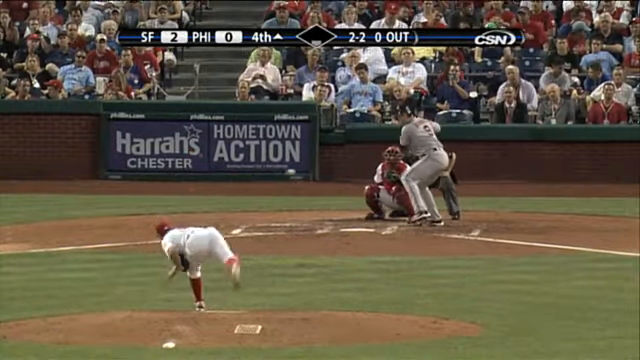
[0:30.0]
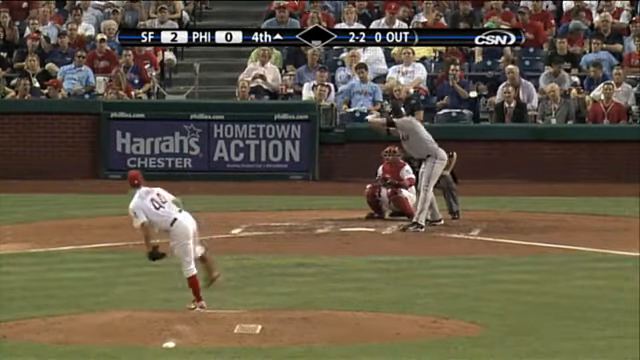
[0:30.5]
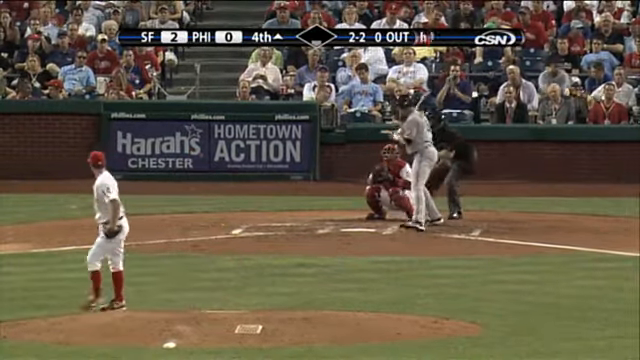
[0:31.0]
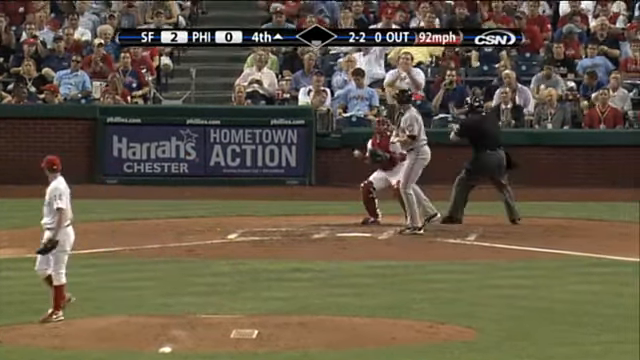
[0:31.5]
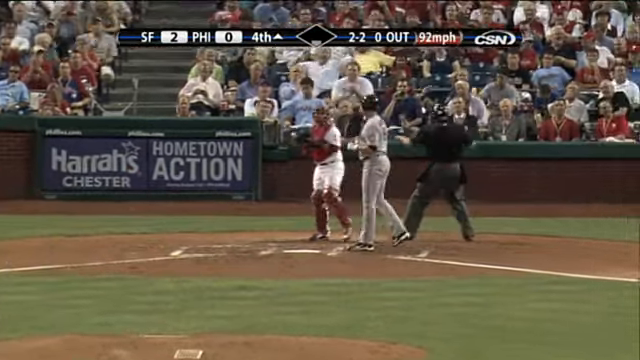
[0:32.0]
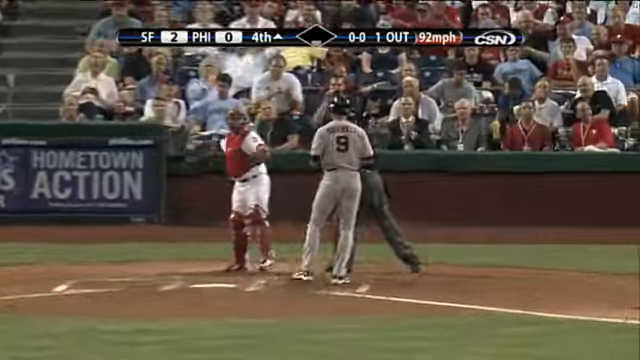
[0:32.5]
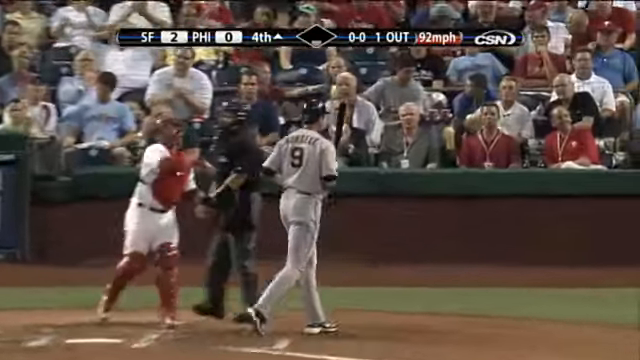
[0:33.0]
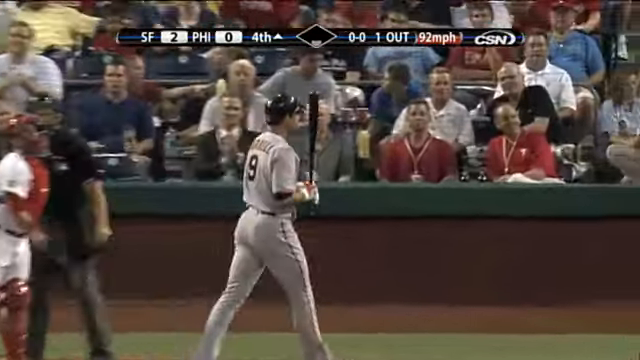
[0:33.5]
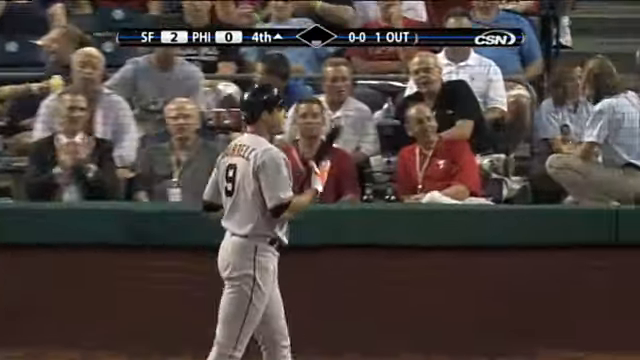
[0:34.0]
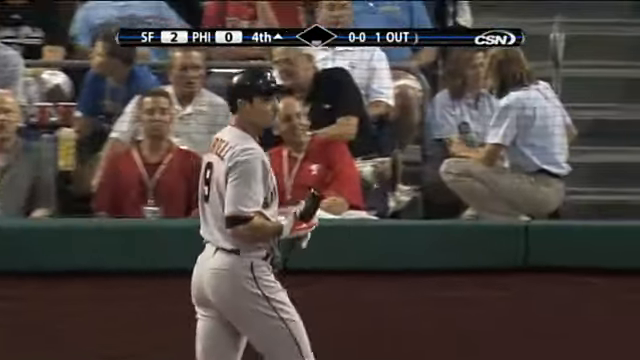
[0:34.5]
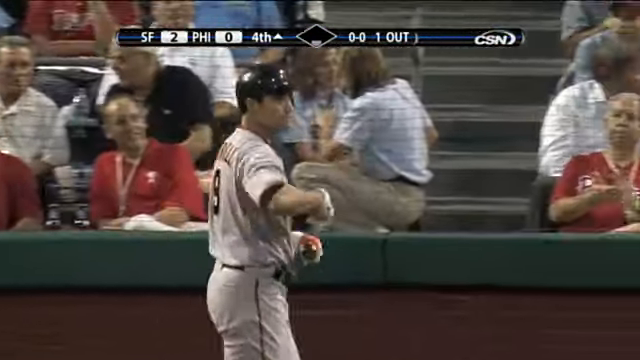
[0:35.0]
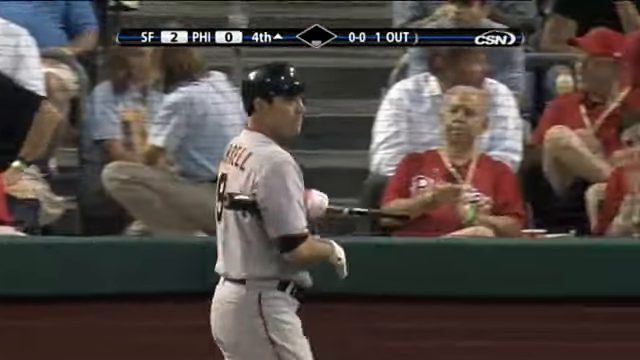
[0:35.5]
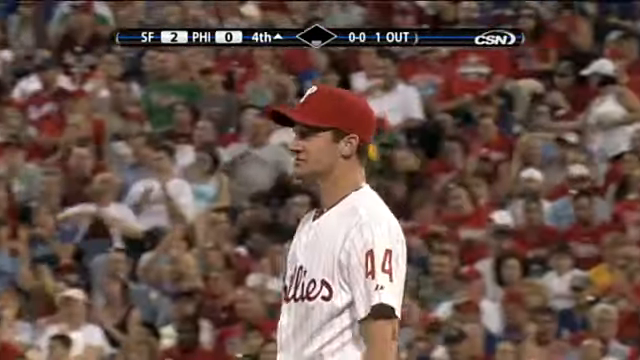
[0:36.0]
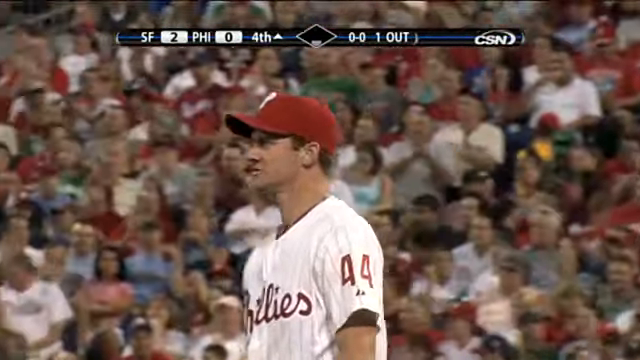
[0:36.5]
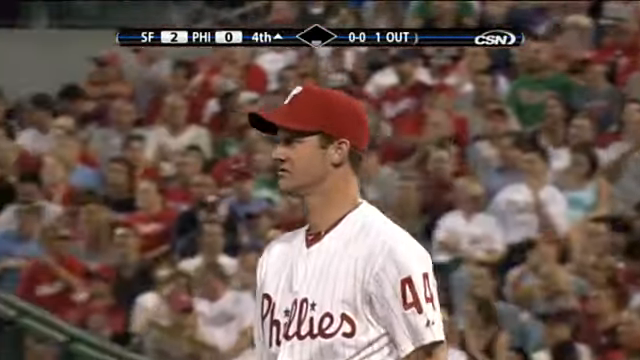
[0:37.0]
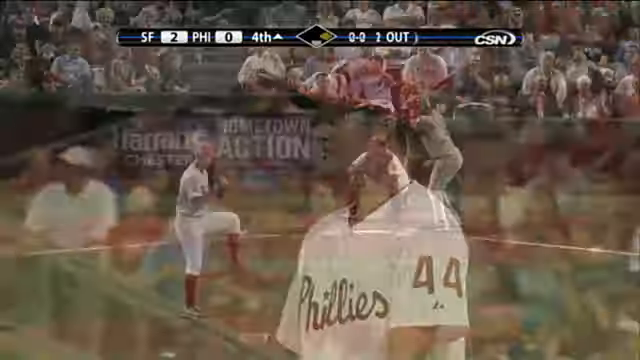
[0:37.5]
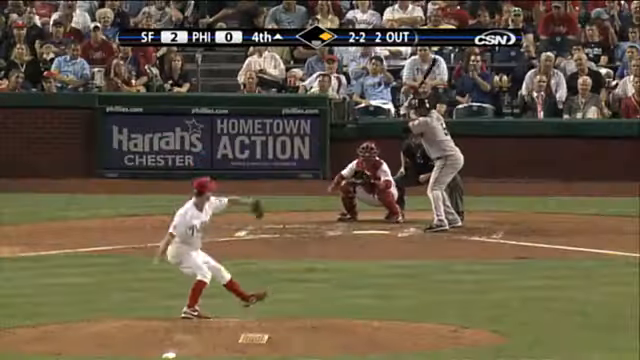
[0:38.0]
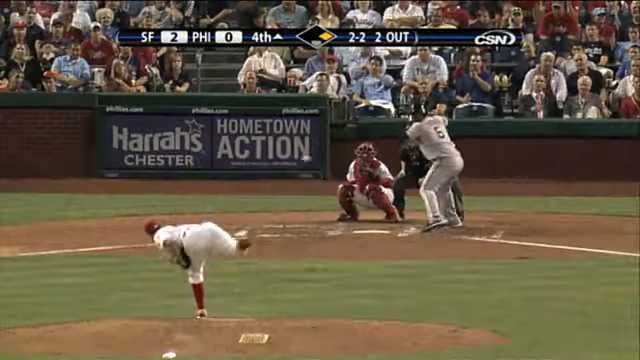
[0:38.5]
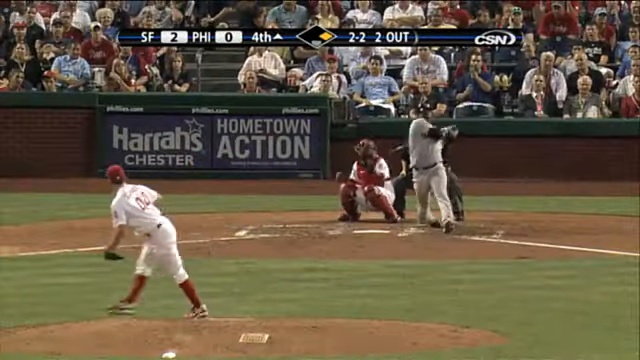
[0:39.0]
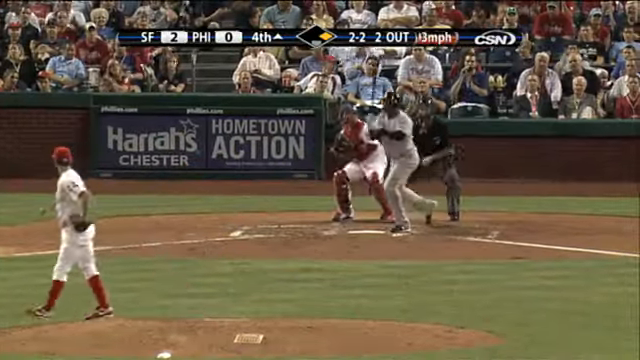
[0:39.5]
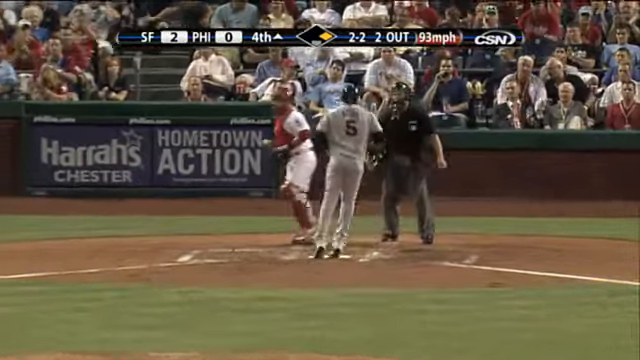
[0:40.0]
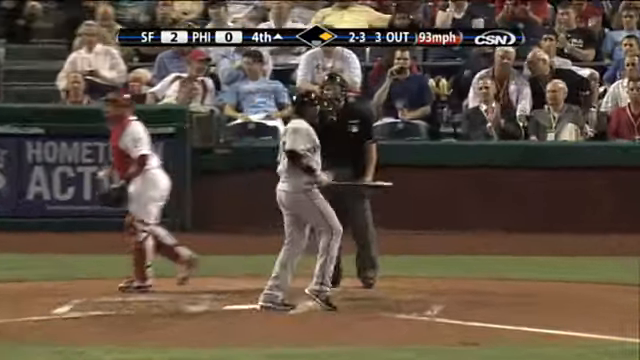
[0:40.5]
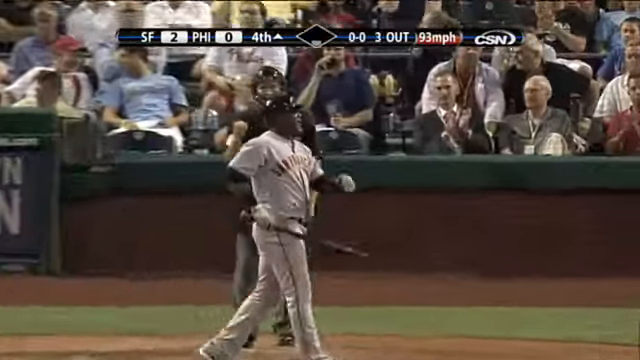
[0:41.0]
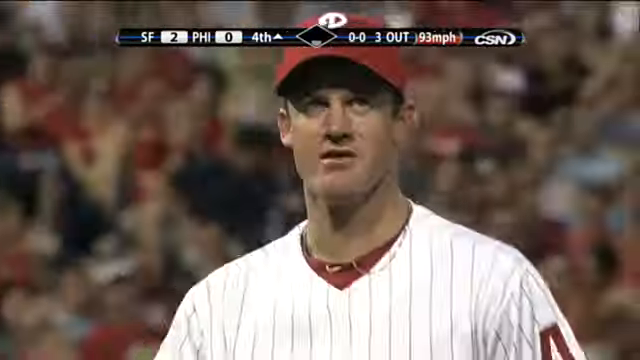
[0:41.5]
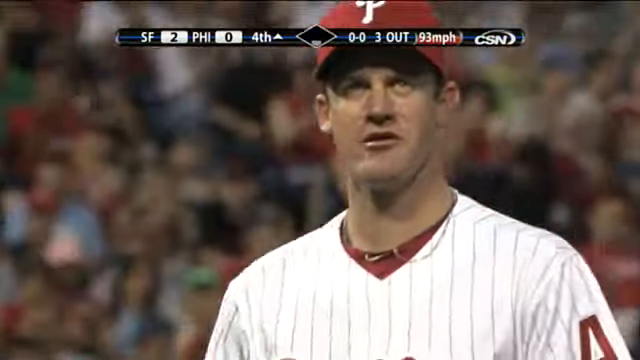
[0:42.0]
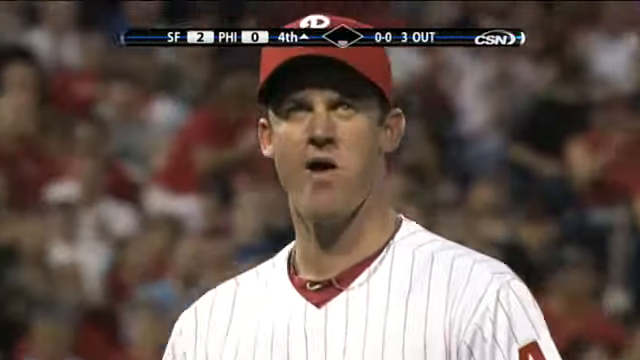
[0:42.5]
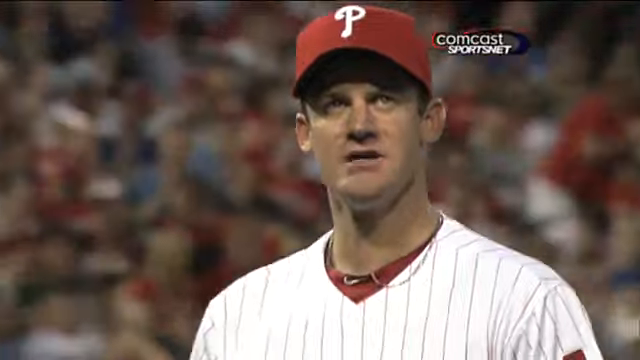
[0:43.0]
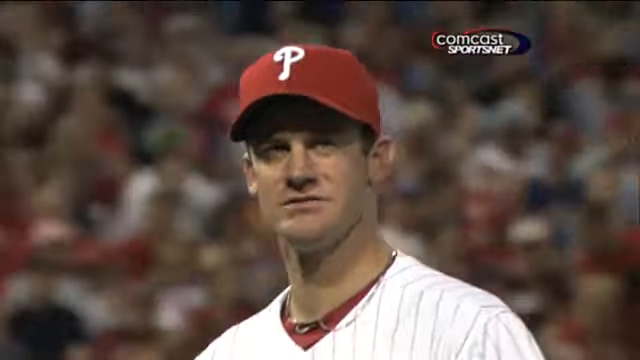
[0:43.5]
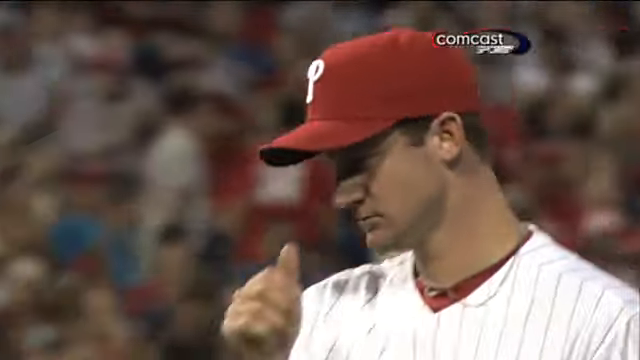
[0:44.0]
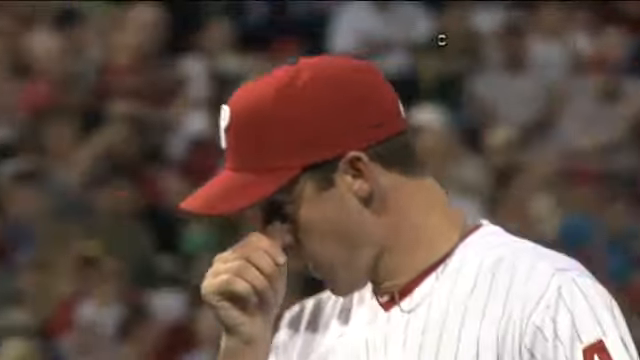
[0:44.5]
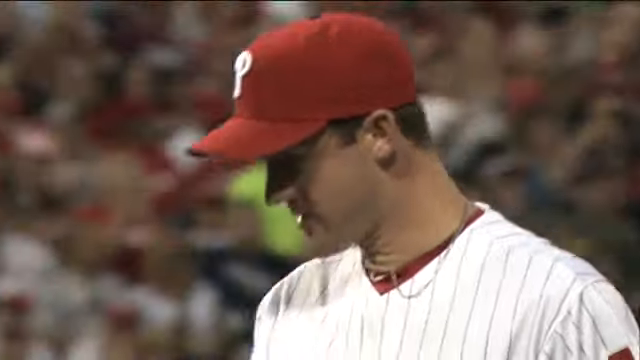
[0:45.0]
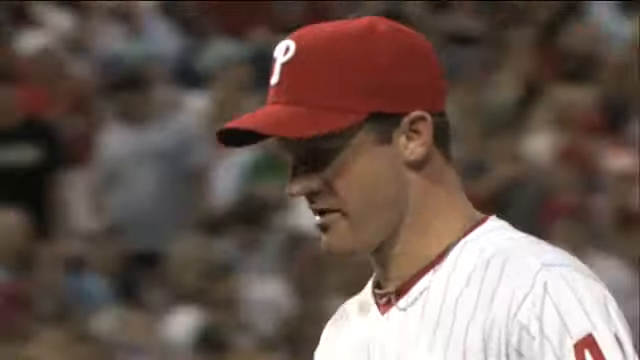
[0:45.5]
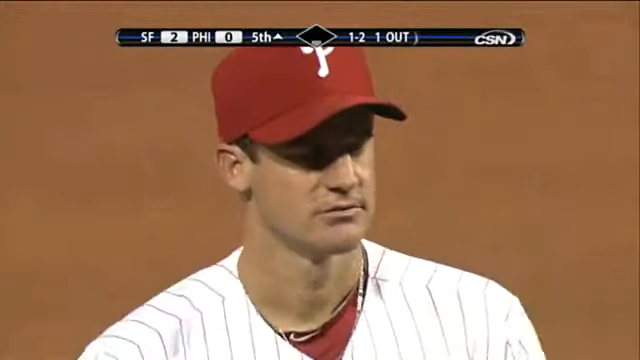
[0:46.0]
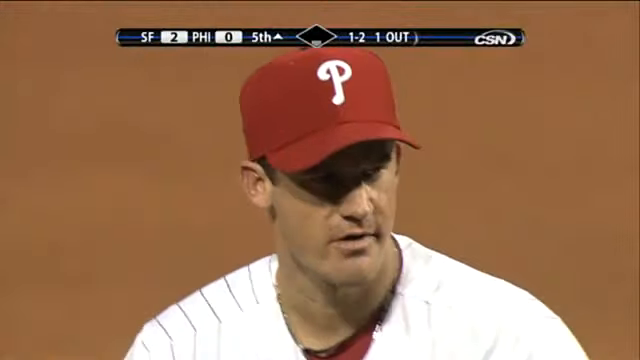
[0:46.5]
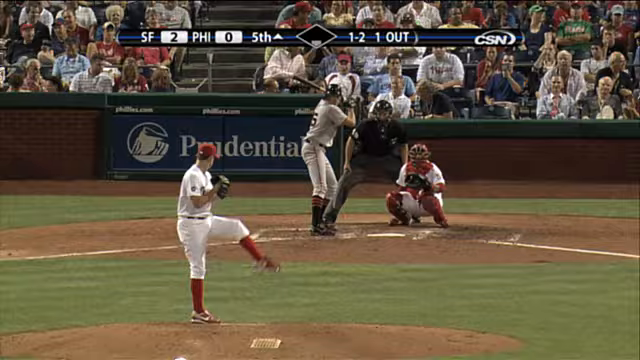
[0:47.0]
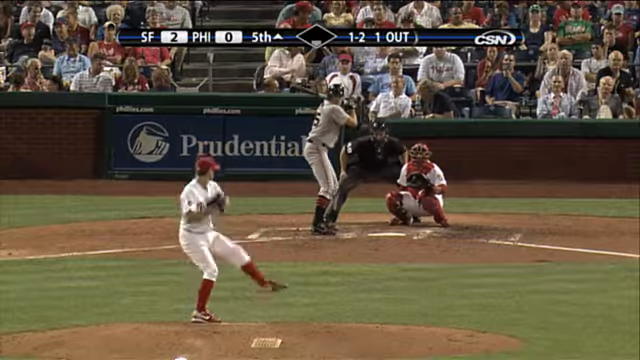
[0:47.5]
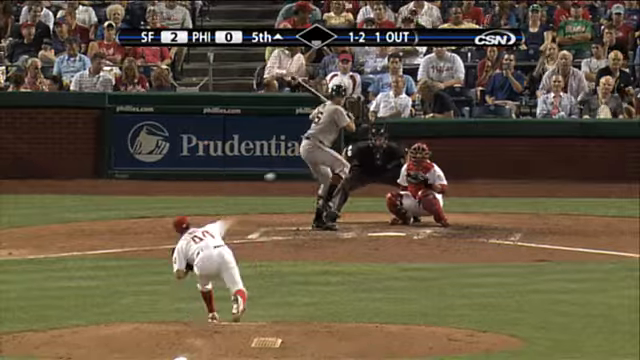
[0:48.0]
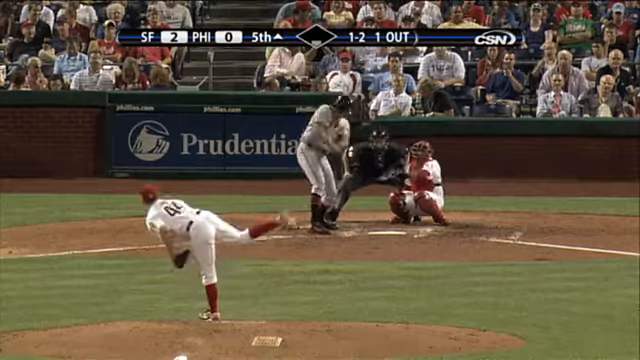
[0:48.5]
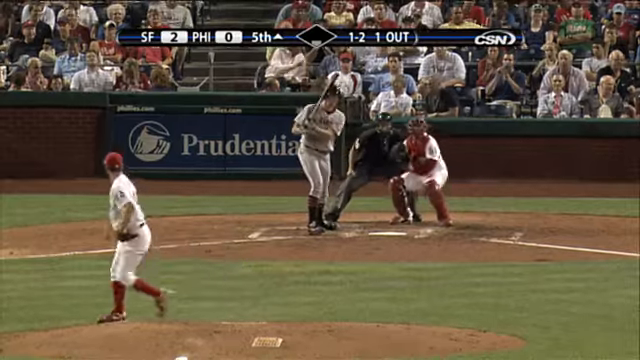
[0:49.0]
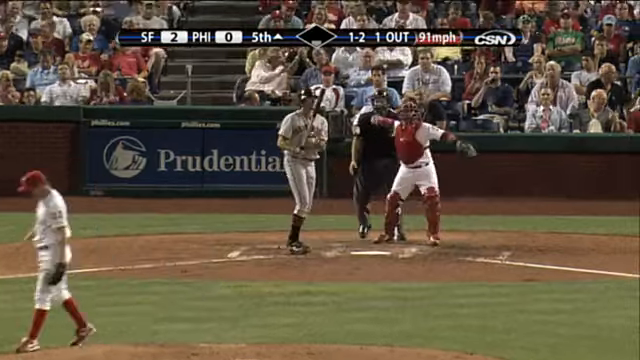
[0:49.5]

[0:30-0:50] Batter number nine is in a kind of squatty position, his knees bent more than some of the others, almost at a 45-degree angle. In the middle of the windup, the pitch comes kind of middle to a little inside; the batter, seemingly reading it as an inside pitch, moves his upper body kind of back almost as if it is going to hit him. The umpire emphatically pulls his right leg back, turns and punches the air, pulling his right elbow back almost like starting a pull lawnmower. Number nine kind of looks back as the catcher throws the ball around, almost hitting him. The batter holds the bat up in his hand, looks around and starts taking his batting gloves off. A close-up from the side shows Roy Oswalt chomping his gum. In another pitch sequence, the batter swings this time, with a runner on first and two out. Oswalt throws a high and inside heater; the batter misses it and kind of stumbles away on one leg. This time the umpire is emphatic with a kind of twist of his fist as he strikes him out. Oswalt, still chomping his gum, walks off and rubs his nose for a second. In the next pitch sequence, the batter takes what looks like a terrible swing, kind of standing there and just batting at the ball, and misses it; the pitch is only 91 miles an hour, a little on the outer part of the plate.